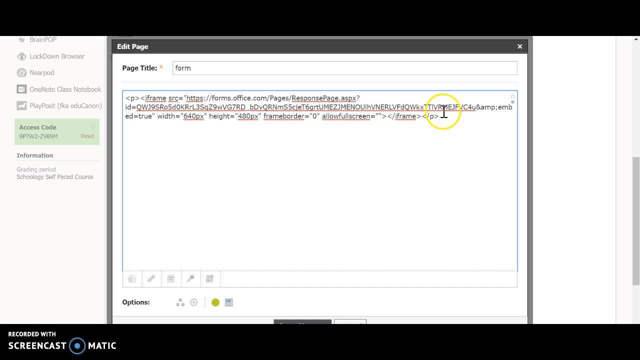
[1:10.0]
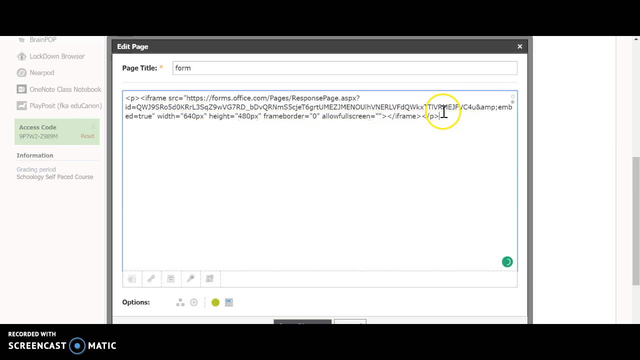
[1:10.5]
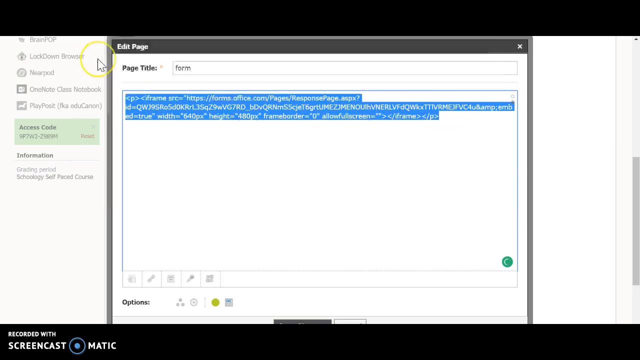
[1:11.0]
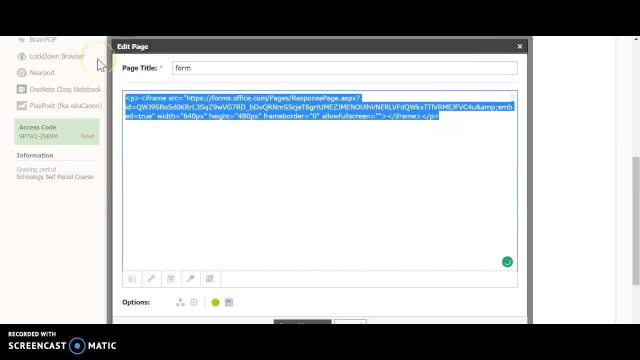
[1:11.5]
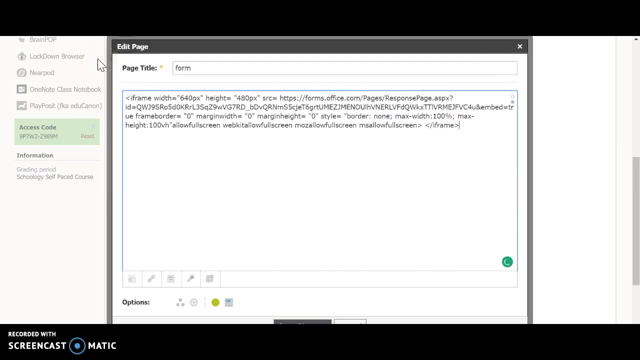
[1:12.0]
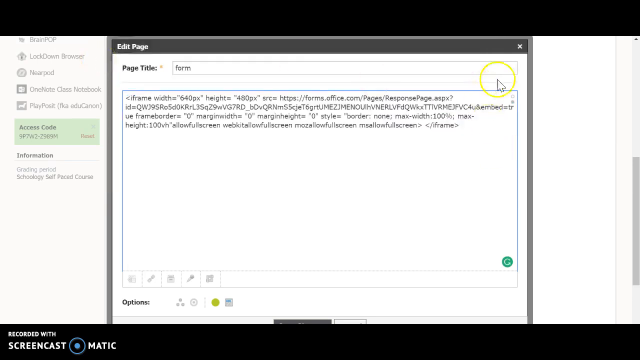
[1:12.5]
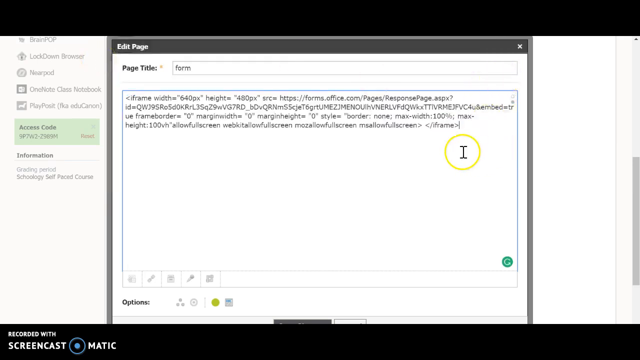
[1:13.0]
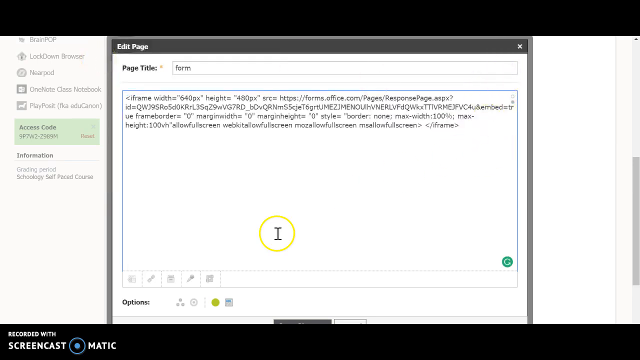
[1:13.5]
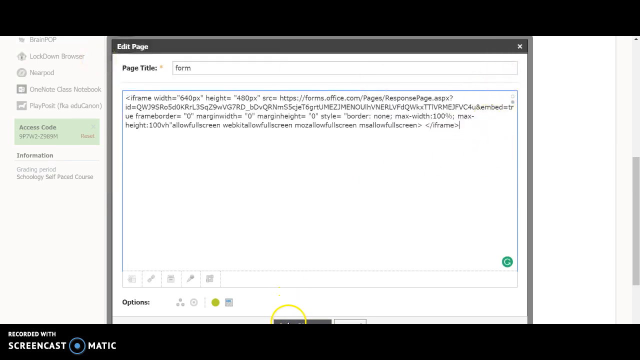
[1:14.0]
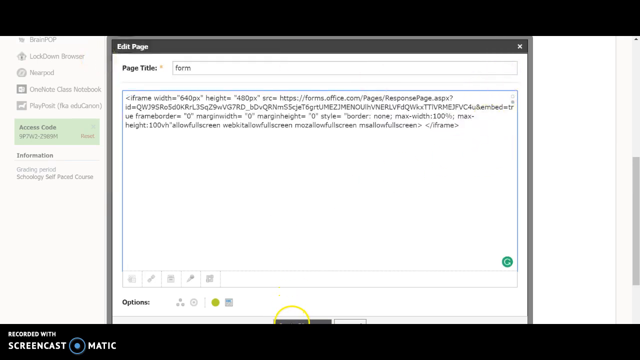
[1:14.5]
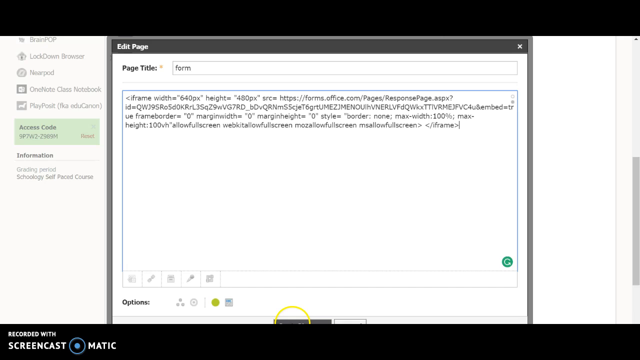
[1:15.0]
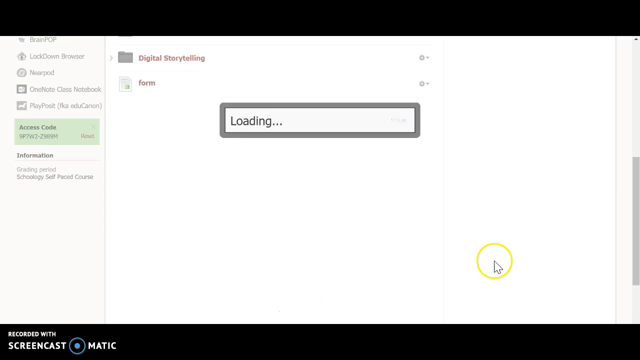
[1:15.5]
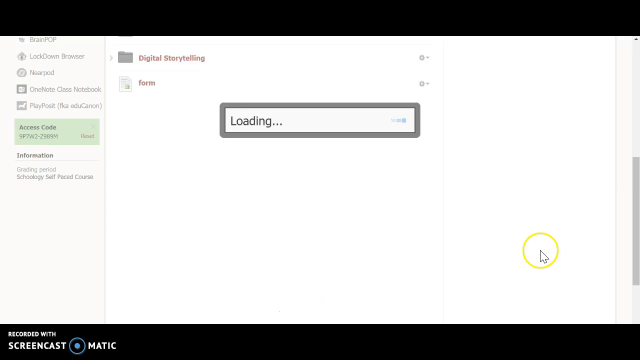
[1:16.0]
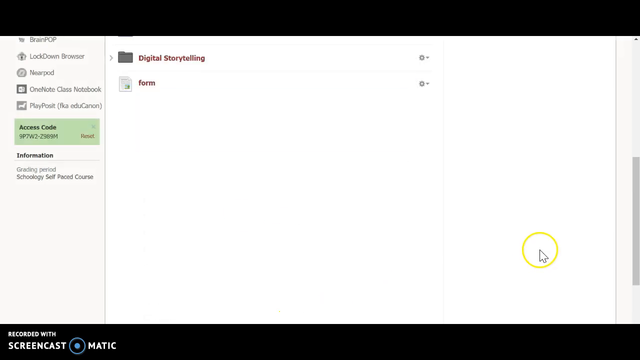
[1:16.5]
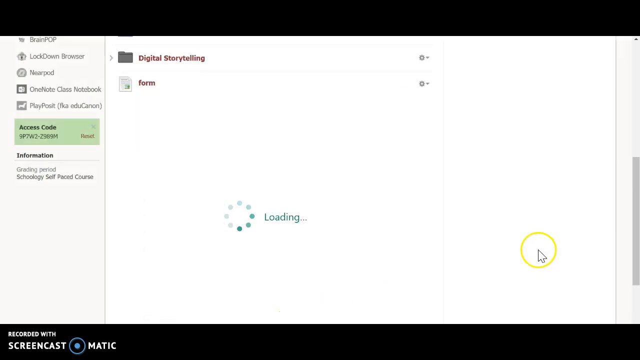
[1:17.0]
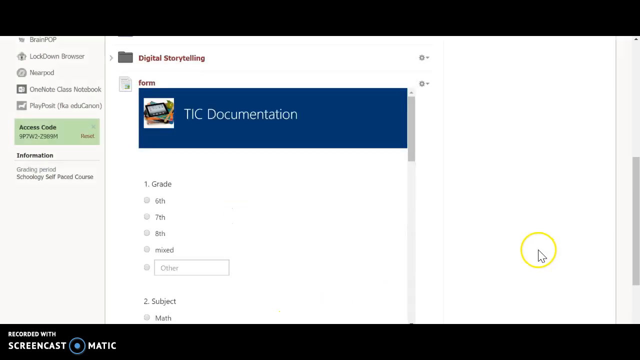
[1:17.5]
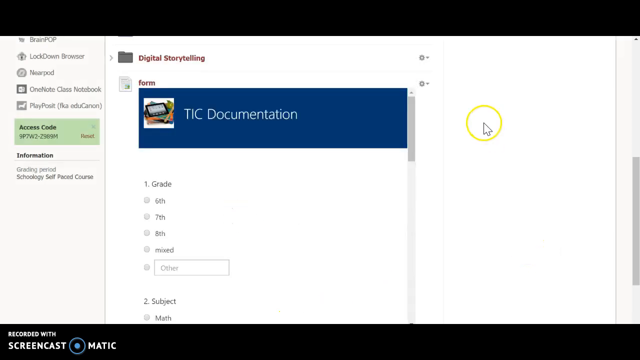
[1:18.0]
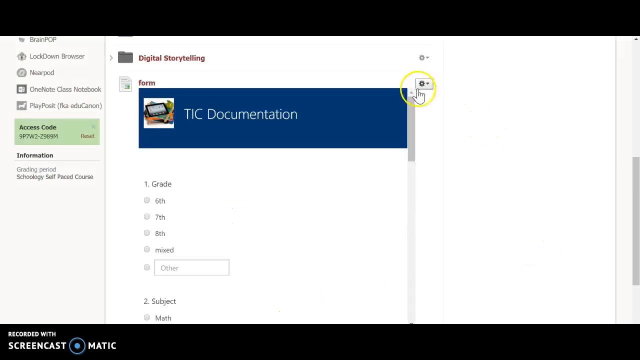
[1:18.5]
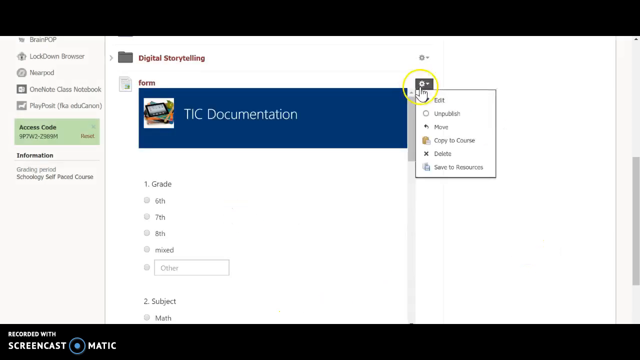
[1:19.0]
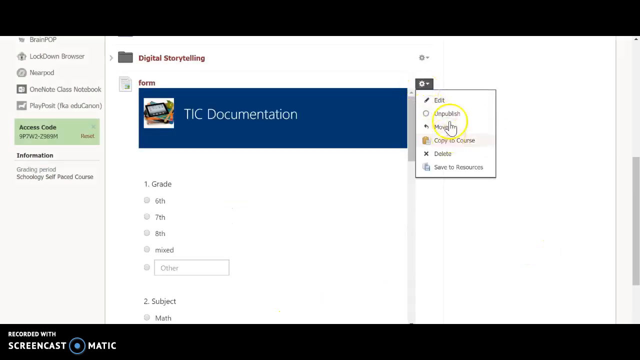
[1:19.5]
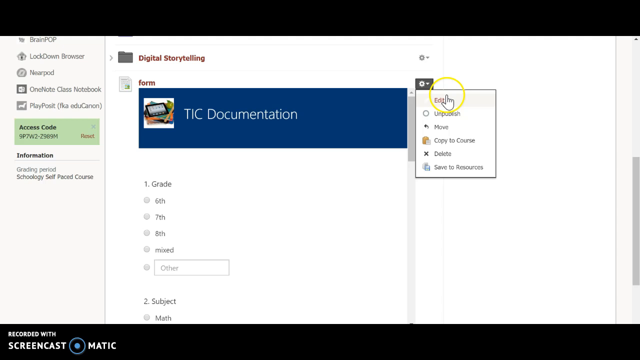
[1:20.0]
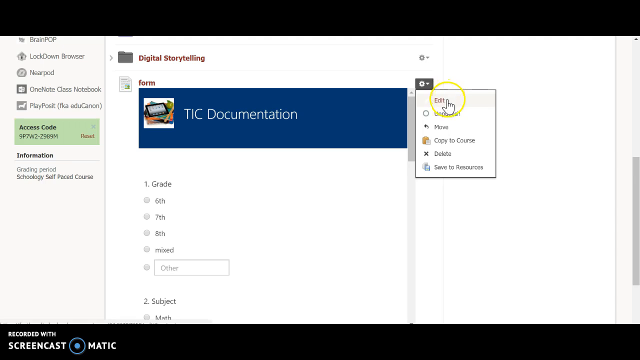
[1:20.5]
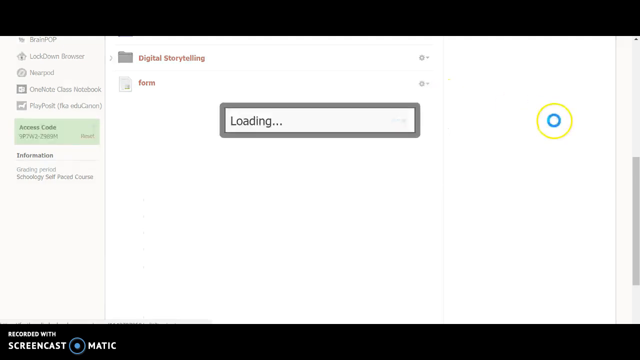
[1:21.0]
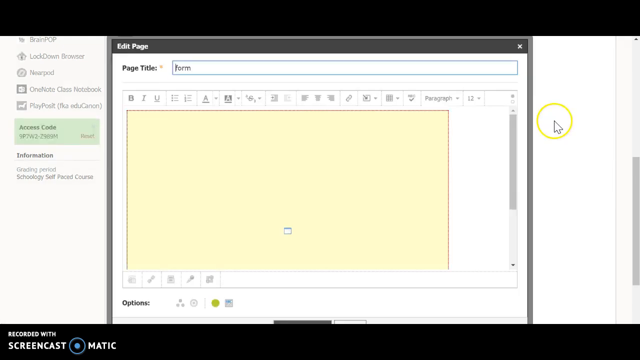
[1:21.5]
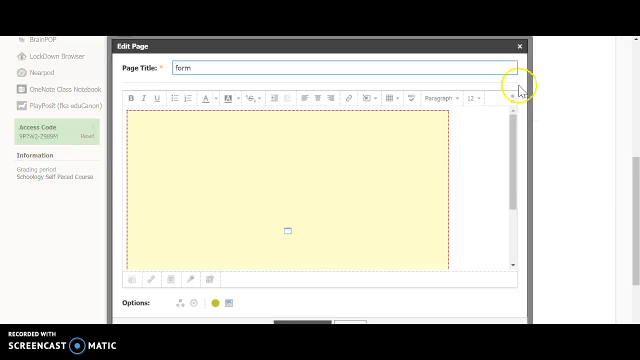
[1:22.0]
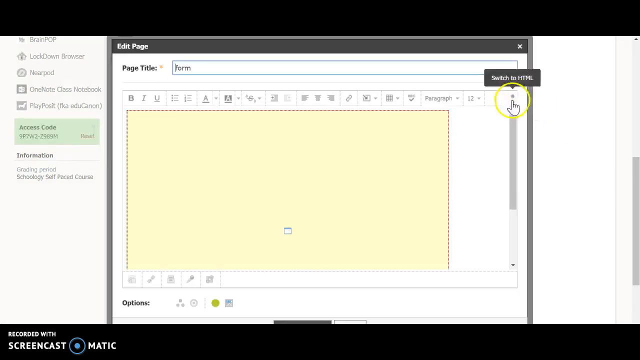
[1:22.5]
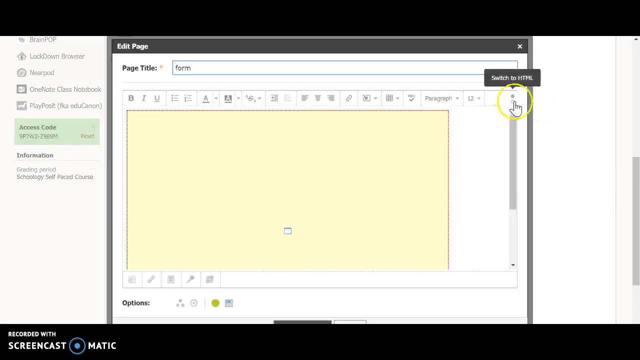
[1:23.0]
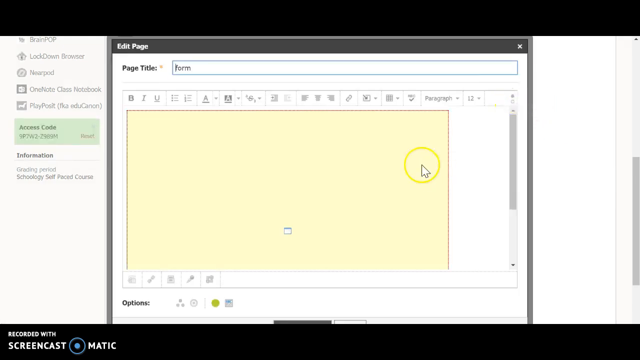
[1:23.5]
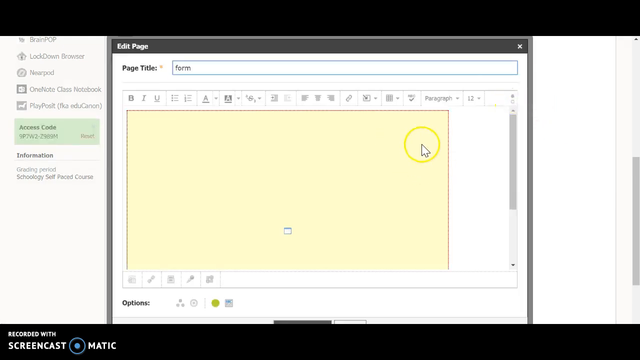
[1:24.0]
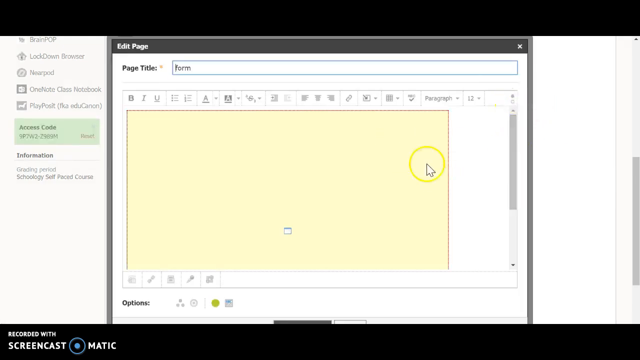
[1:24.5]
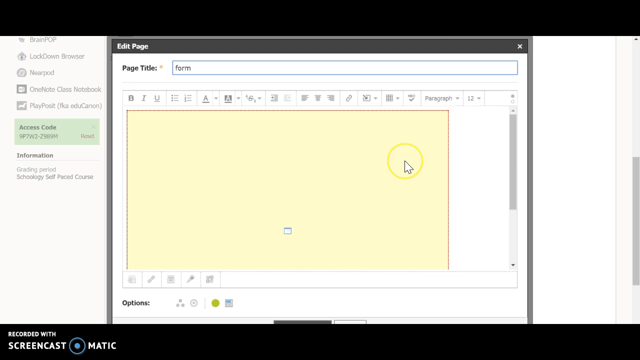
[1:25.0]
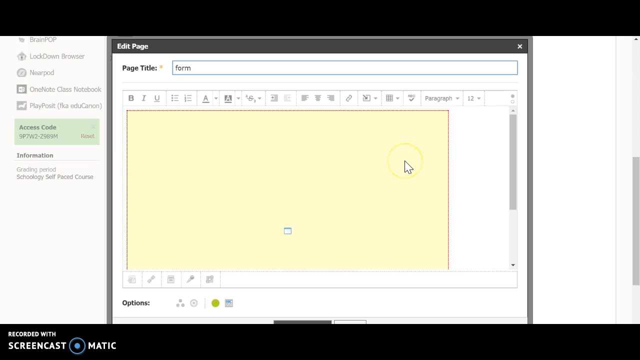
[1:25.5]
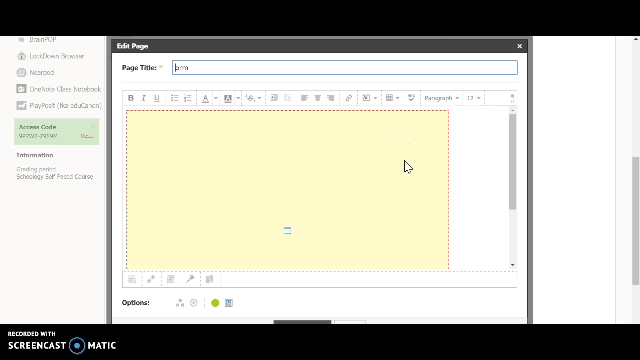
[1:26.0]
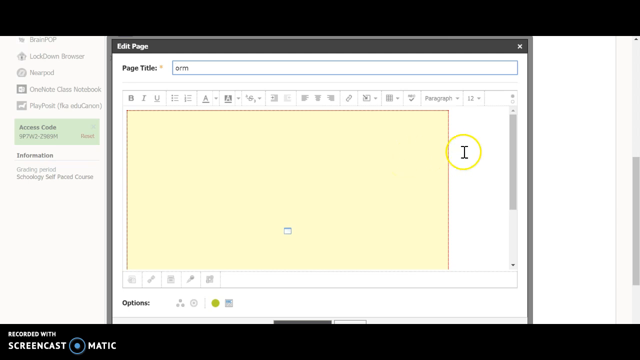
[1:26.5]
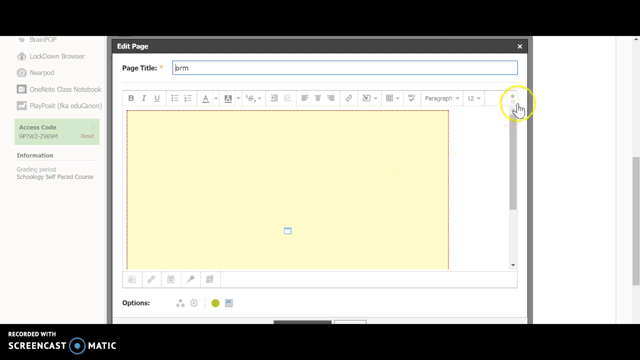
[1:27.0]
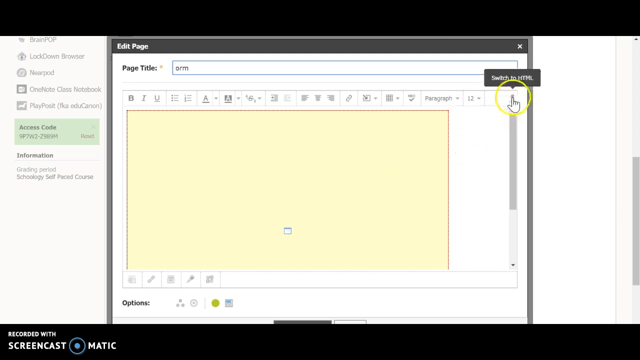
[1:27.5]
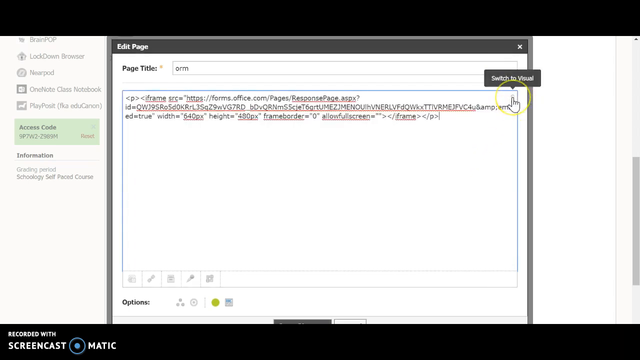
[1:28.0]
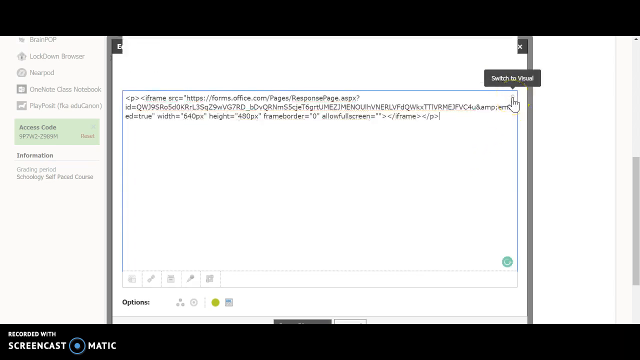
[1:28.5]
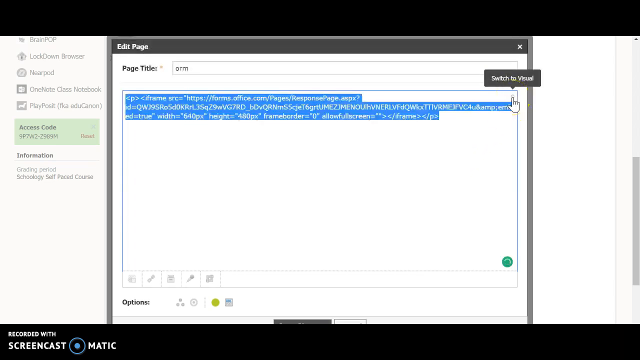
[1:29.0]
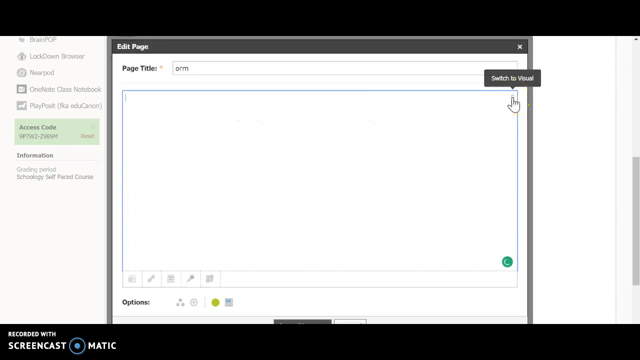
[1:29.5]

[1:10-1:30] A page says "edit page" and "page title," with "form" and some font shown. The user clicks a button that goes to the TIC documentation page, goes to edit, and clicks on a yellow square. They copy the content from the other page and paste it onto the yellow page. To the left it says "lockdown browser, nearpod, notebook, access code," an access code is given, and there is a reset button. It then says "information, grading period, schoology, self-paced course." At the top, "edit page" appears in a black bar, along with a white X. The user clicks on different parts of the page, copies the information, and moves the cursor around, hitting different options.